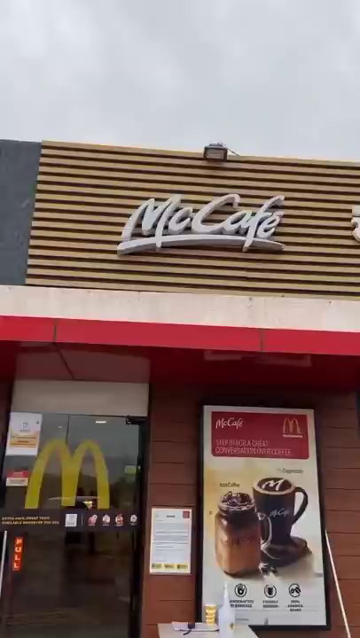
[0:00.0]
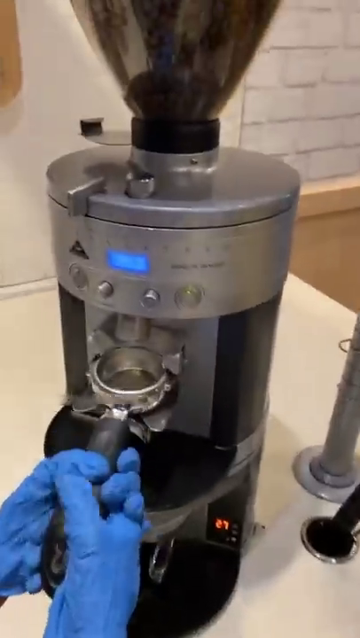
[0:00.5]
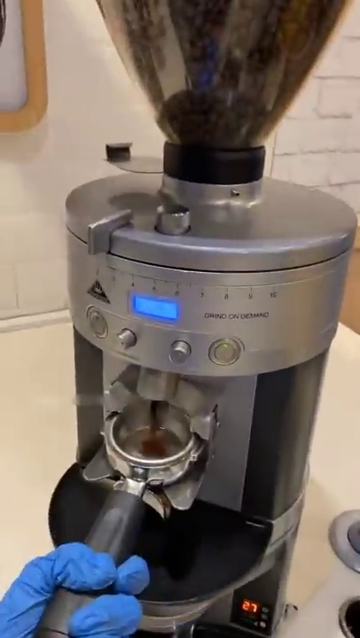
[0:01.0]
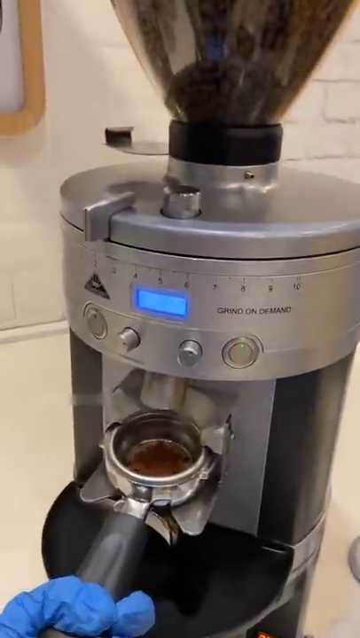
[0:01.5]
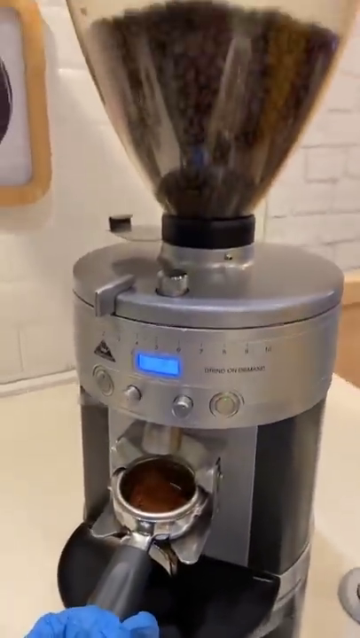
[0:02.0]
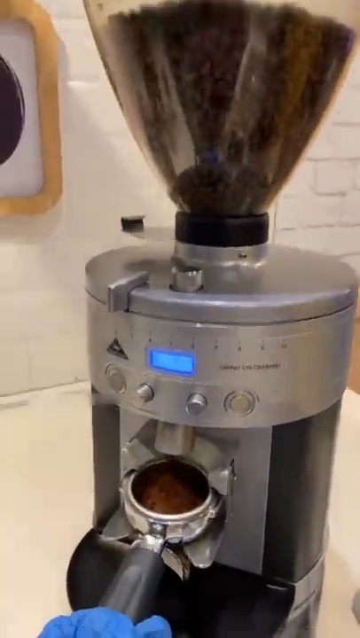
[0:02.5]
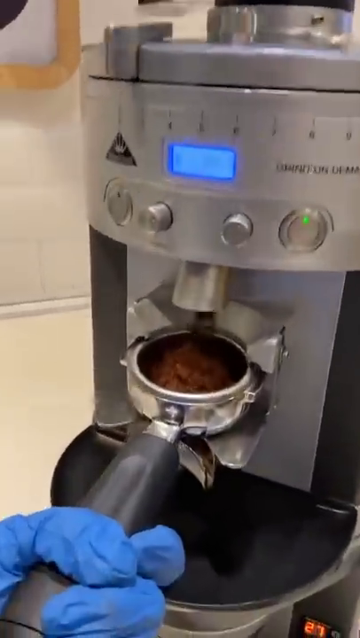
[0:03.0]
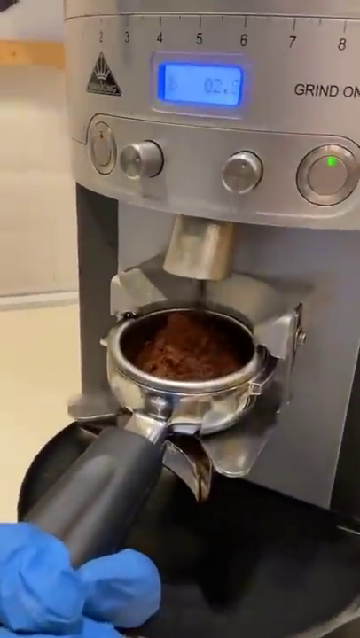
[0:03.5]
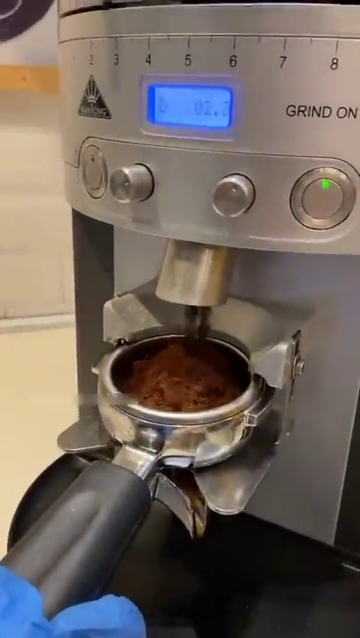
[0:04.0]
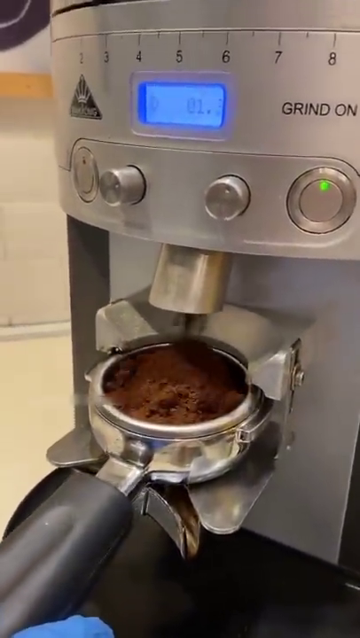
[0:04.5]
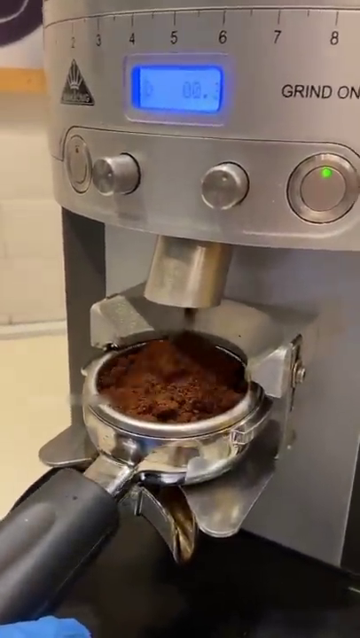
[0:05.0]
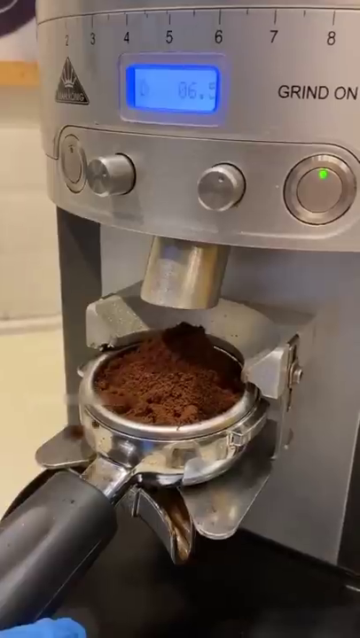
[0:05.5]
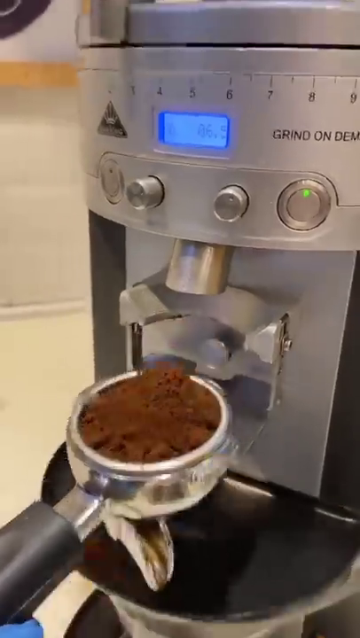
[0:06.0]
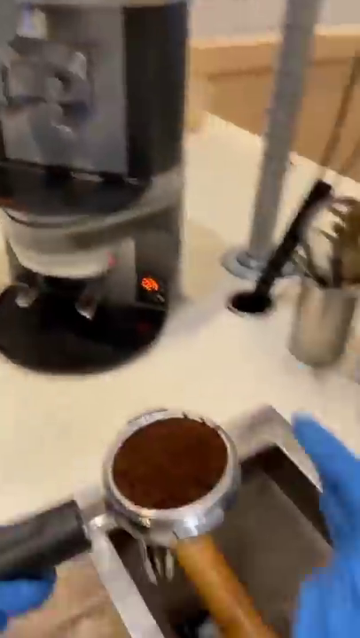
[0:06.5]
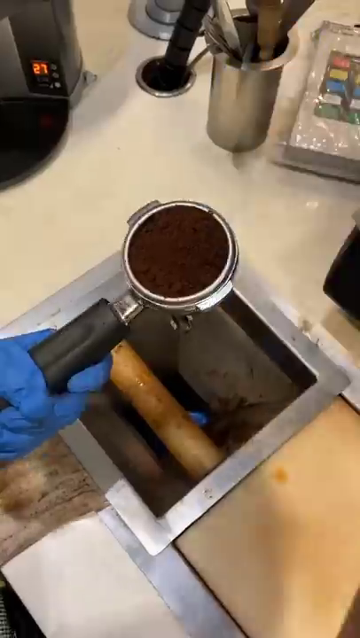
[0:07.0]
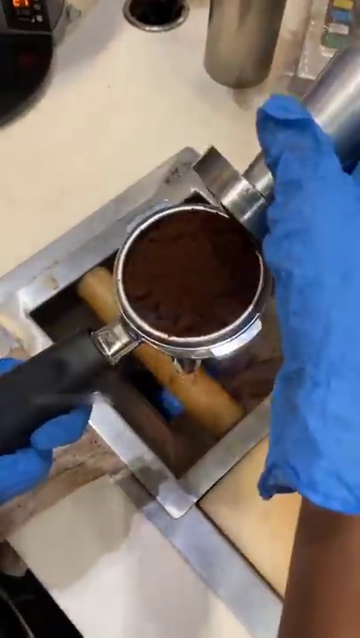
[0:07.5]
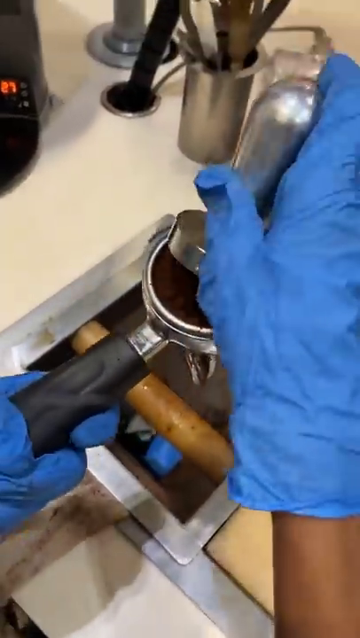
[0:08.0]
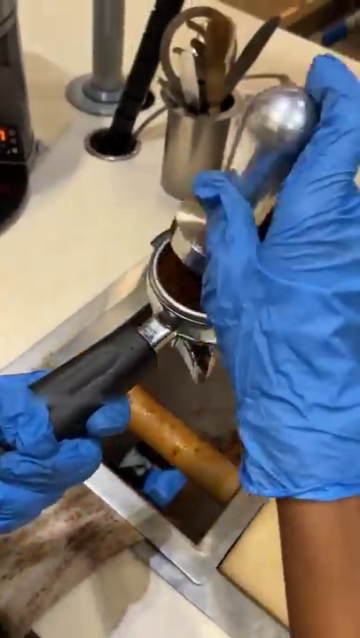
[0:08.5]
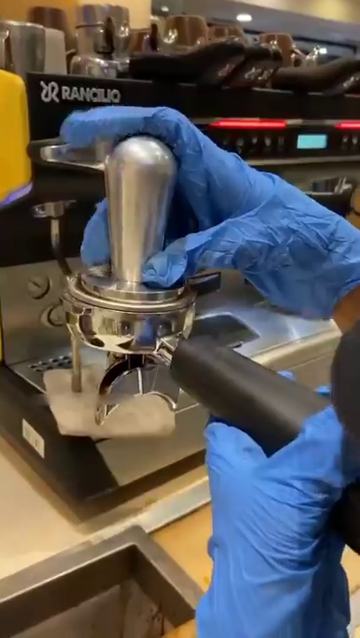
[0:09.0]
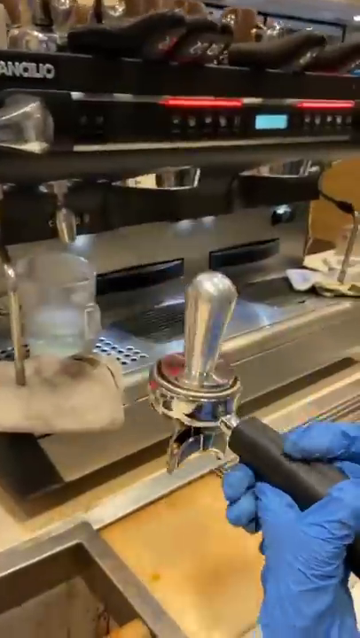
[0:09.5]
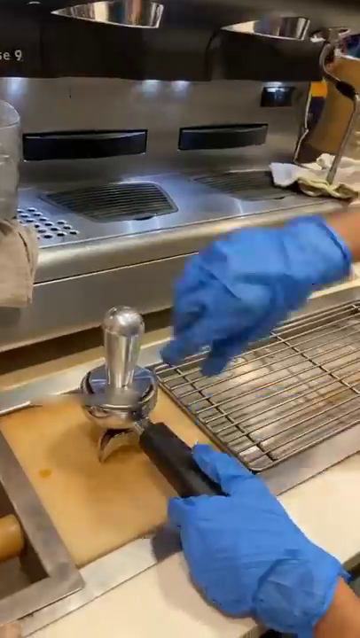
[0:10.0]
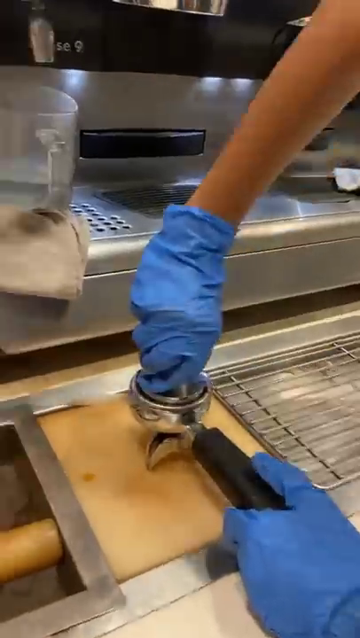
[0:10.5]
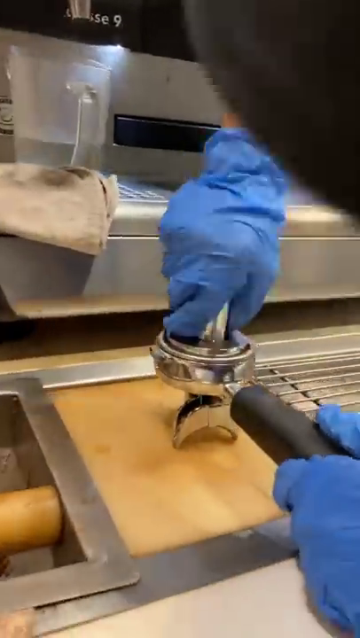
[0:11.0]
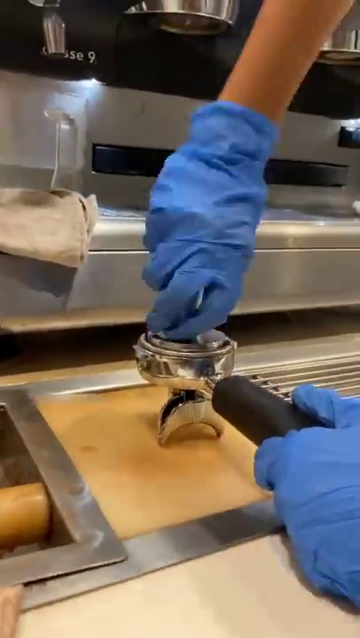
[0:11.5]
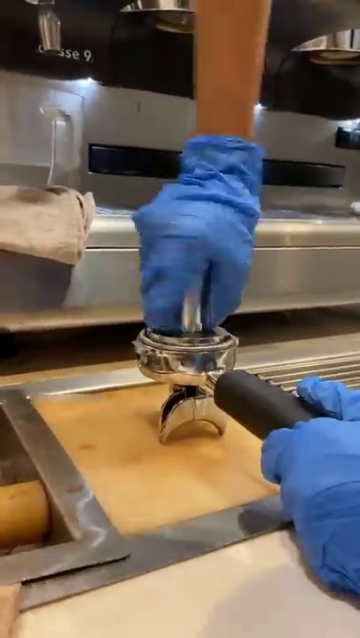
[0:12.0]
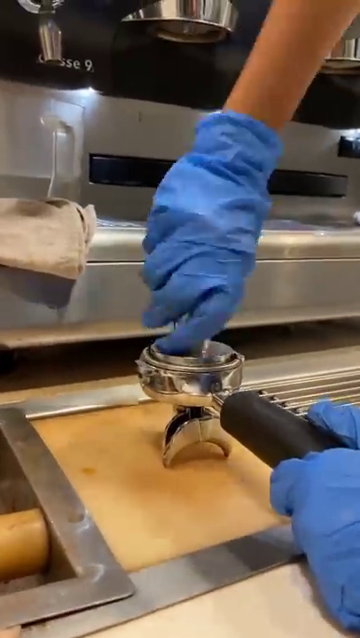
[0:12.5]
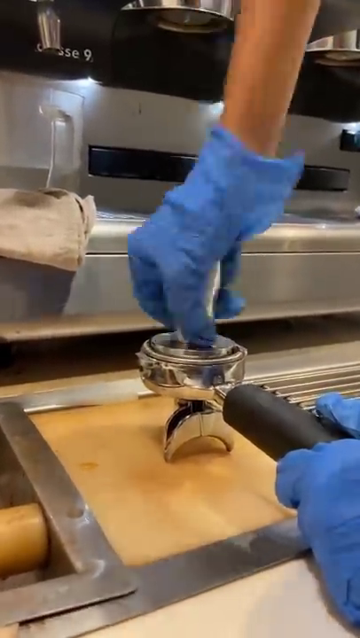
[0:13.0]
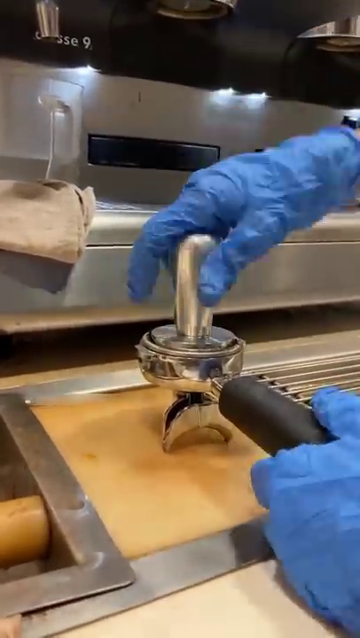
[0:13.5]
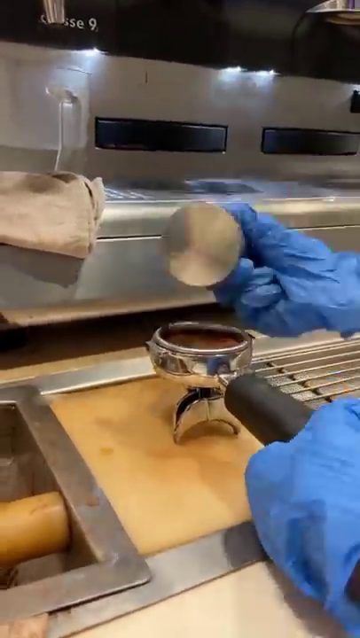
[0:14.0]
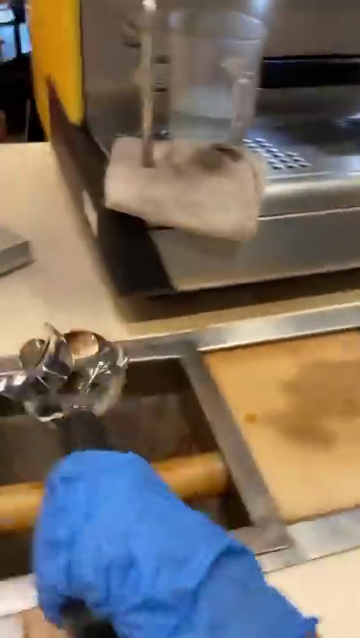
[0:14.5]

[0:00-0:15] The video opens on an exterior shot of a McDonald's restaurant. On the left is a glass door with the golden arches on it, and to the right of the door is an advertisement showing two mugs of some sort of hot drink, presumably coffee. At the top of the building, "McCafe" is written in white letters. Next comes an elaborate coffee machine with a blue LED window on the front. A person wearing blue latex gloves holds a scoop underneath it. At the top of the machine, a clear container funnels coffee beans down into it, and the person holds the scoop underneath to collect the ground coffee. They take the scoop to a counter and use a metal item to push the ground coffee down into the scoop, then twist the item around inside the scoop.